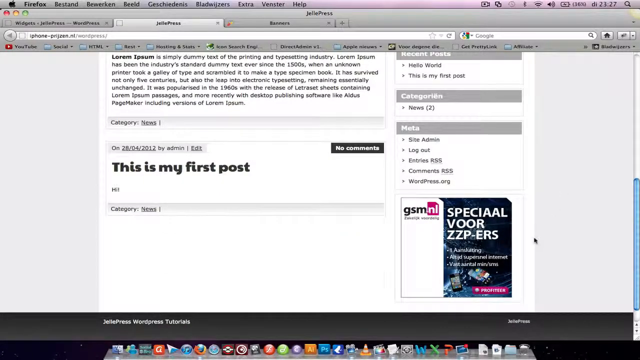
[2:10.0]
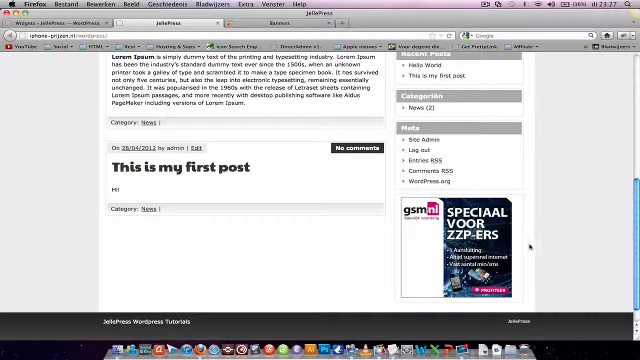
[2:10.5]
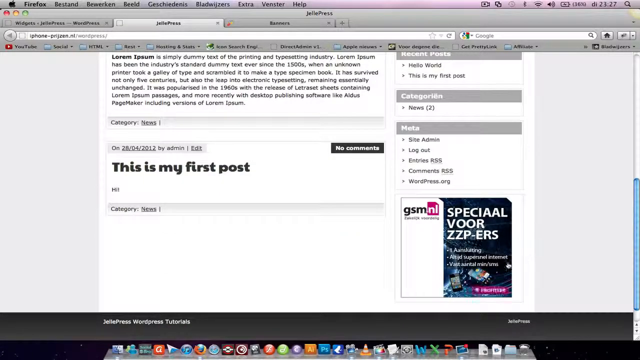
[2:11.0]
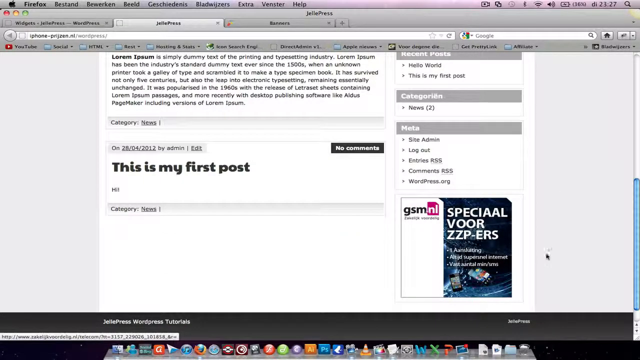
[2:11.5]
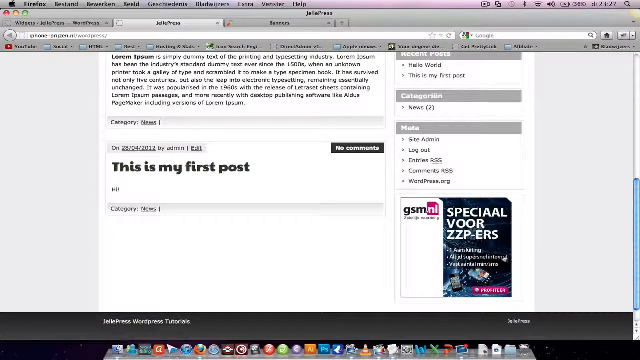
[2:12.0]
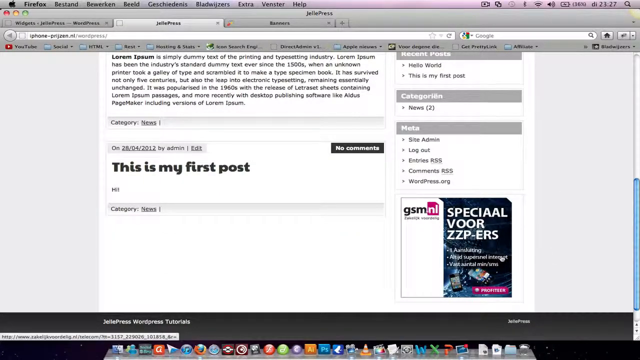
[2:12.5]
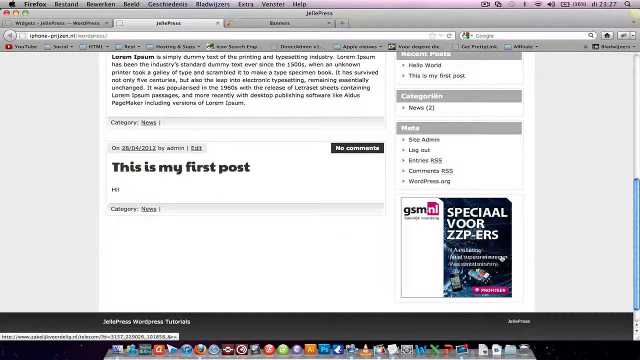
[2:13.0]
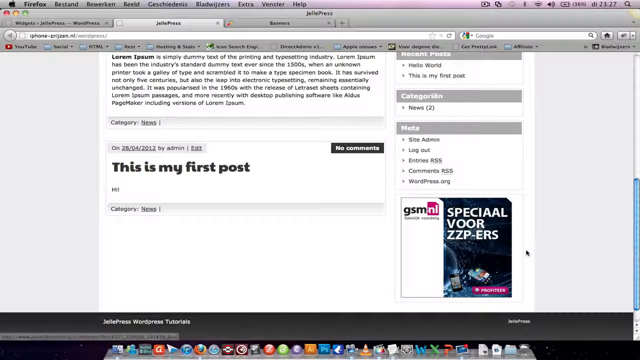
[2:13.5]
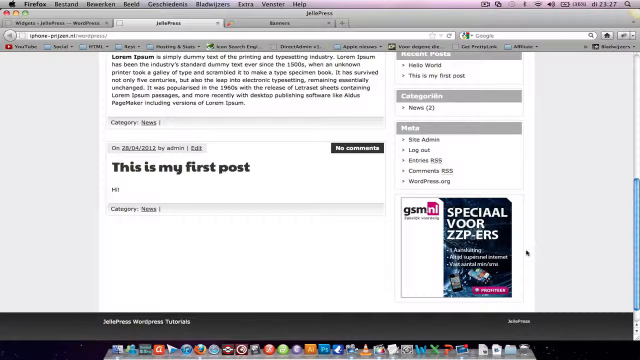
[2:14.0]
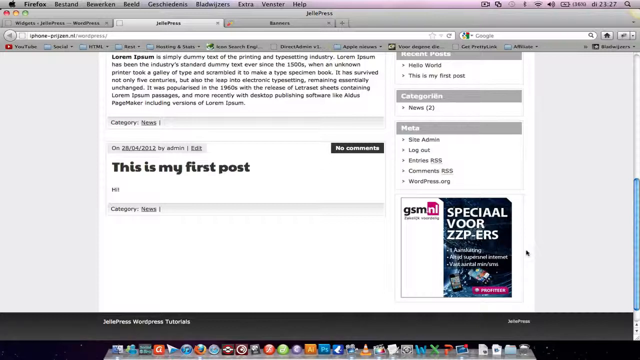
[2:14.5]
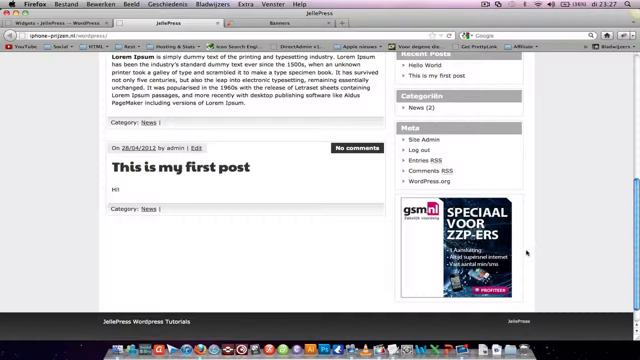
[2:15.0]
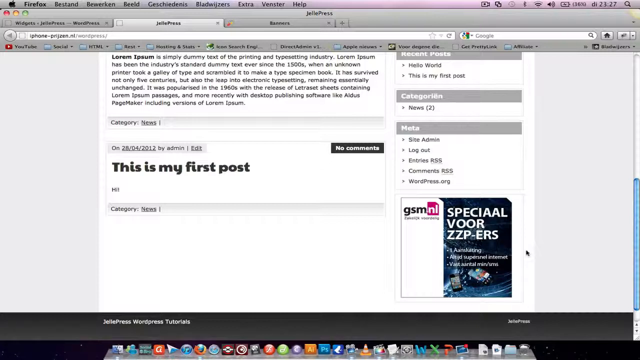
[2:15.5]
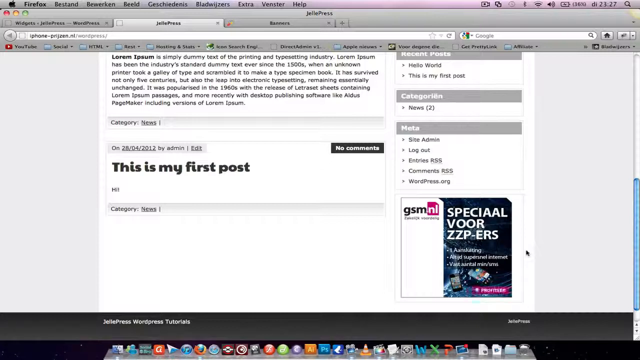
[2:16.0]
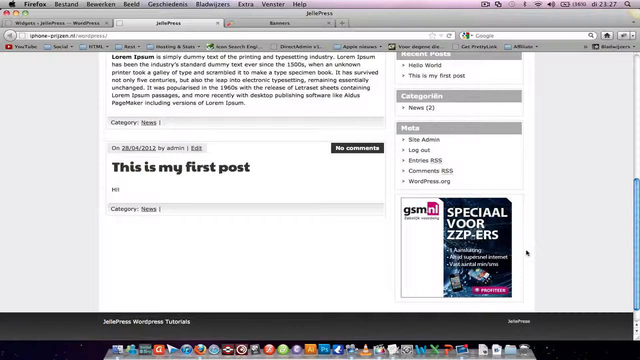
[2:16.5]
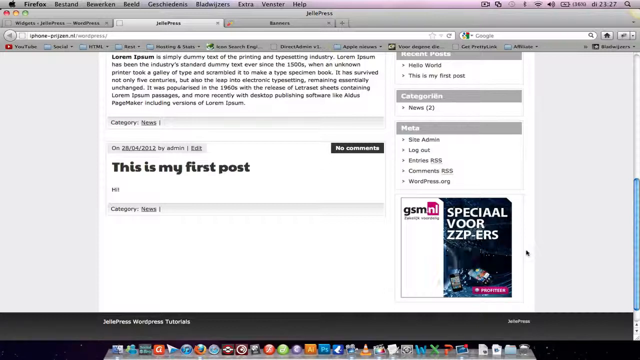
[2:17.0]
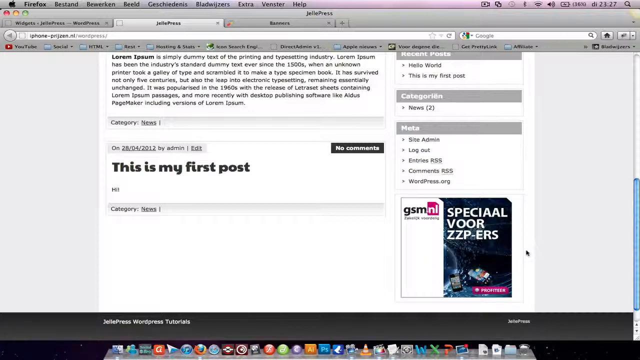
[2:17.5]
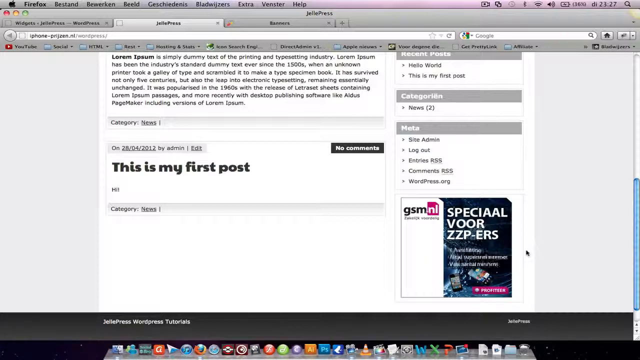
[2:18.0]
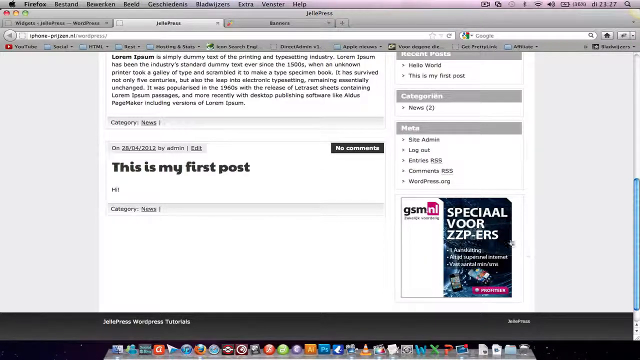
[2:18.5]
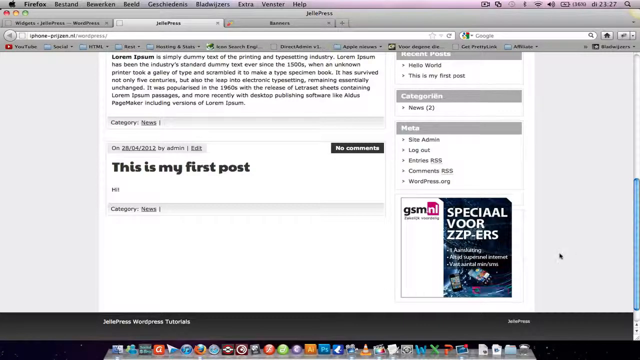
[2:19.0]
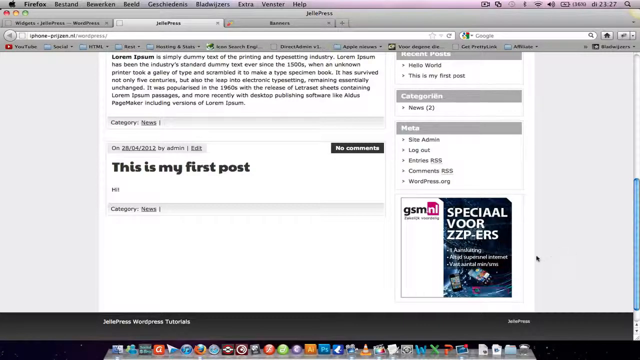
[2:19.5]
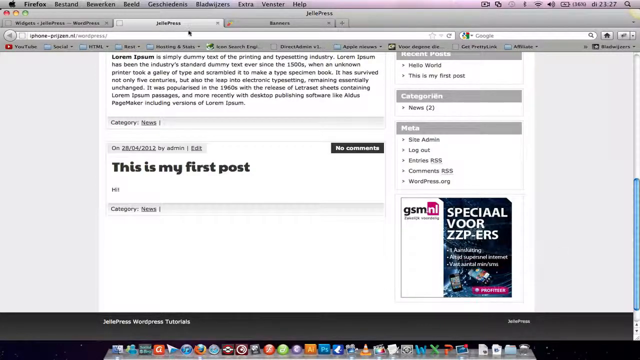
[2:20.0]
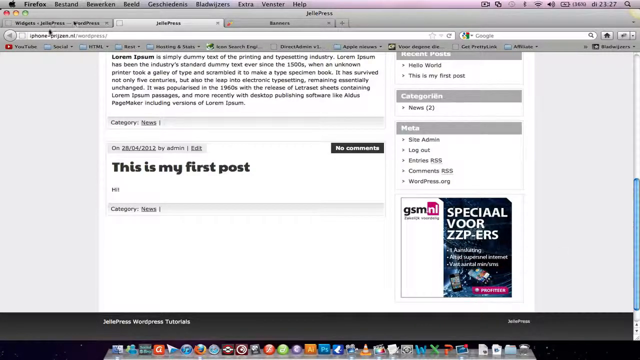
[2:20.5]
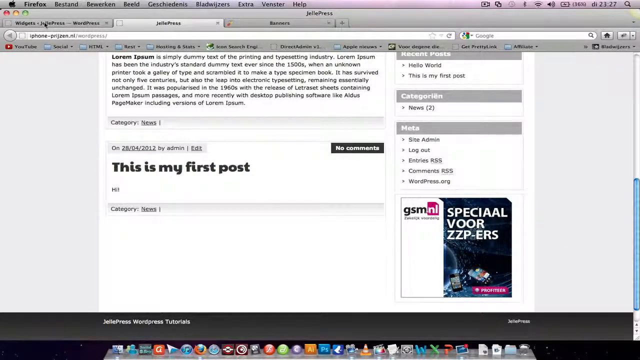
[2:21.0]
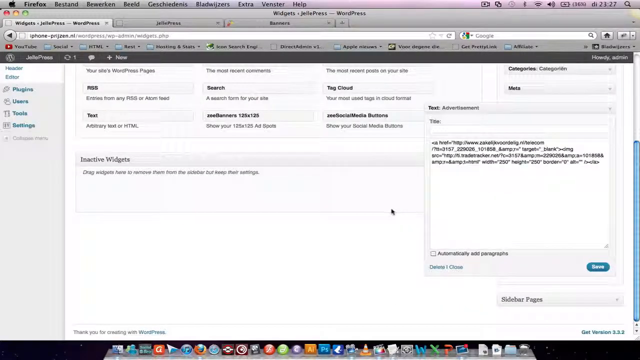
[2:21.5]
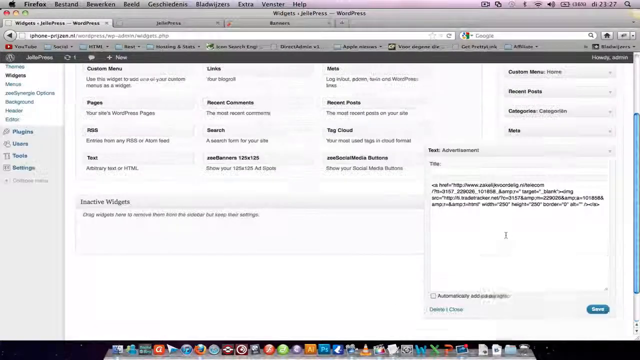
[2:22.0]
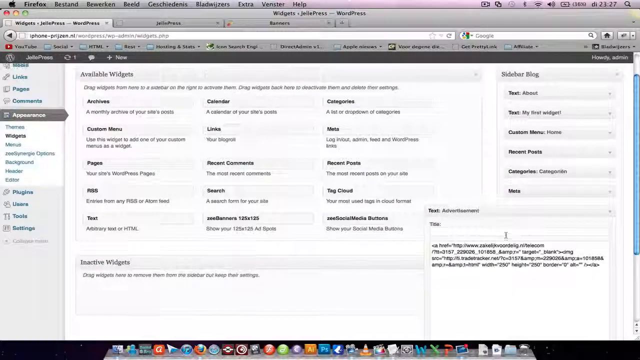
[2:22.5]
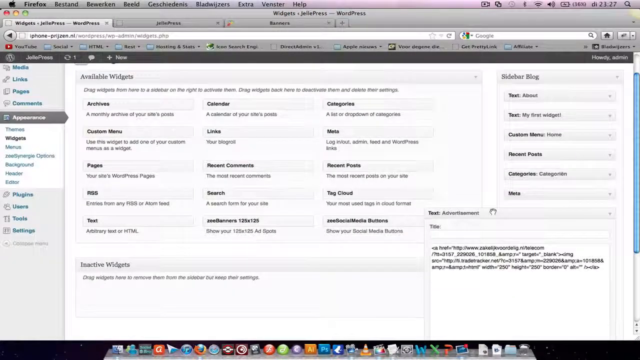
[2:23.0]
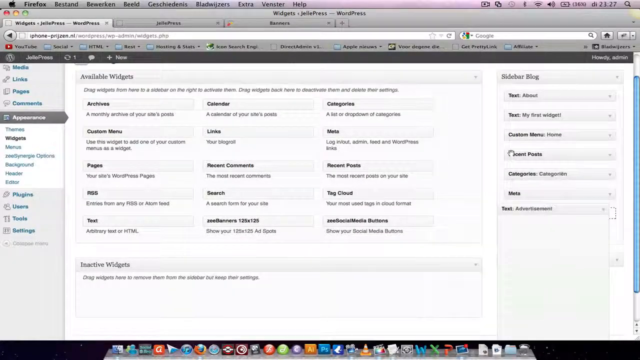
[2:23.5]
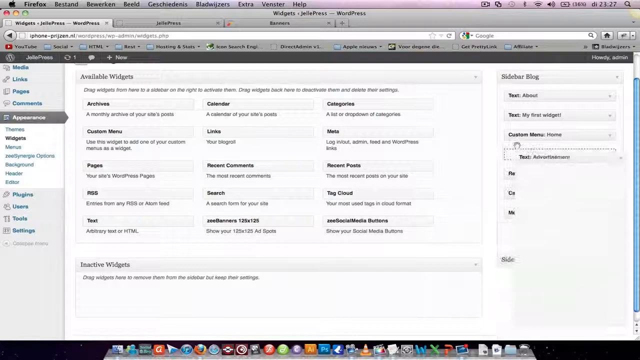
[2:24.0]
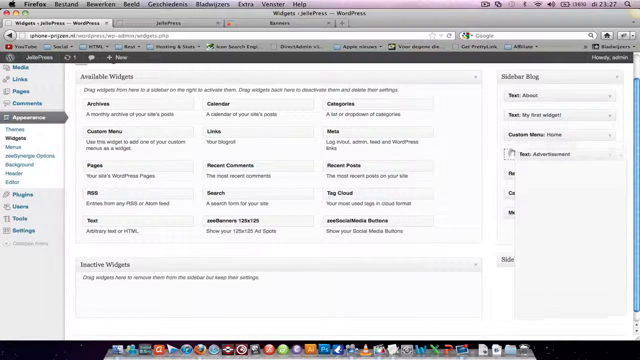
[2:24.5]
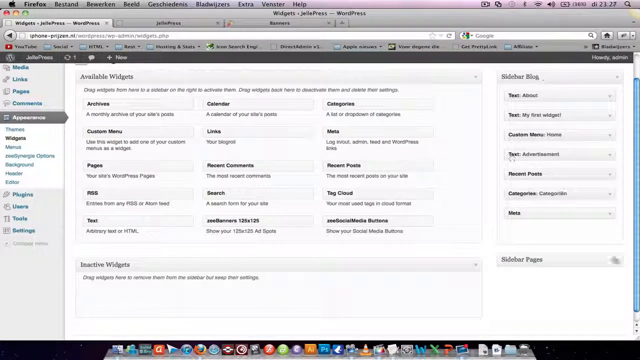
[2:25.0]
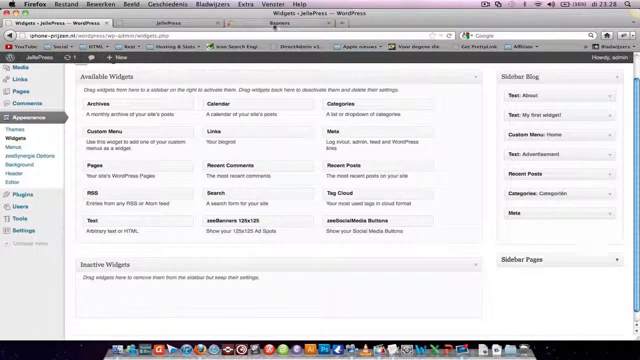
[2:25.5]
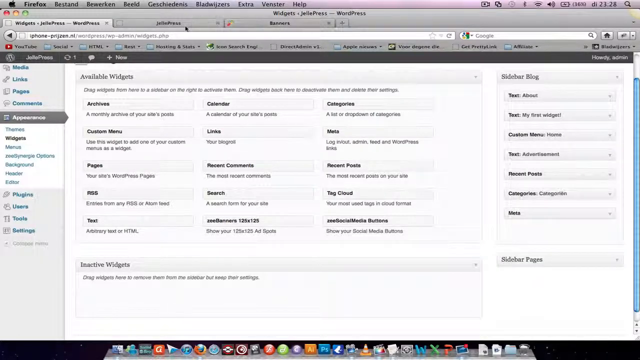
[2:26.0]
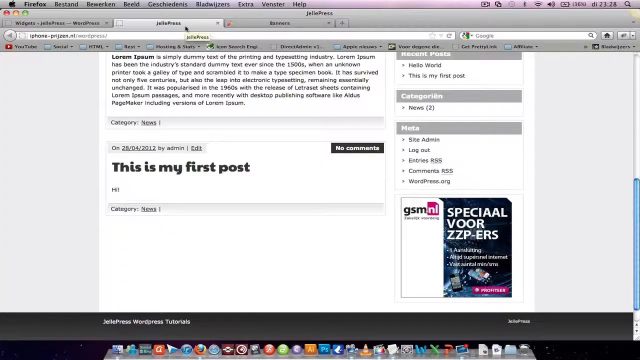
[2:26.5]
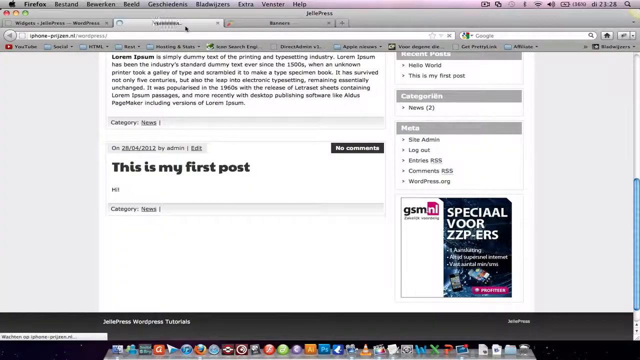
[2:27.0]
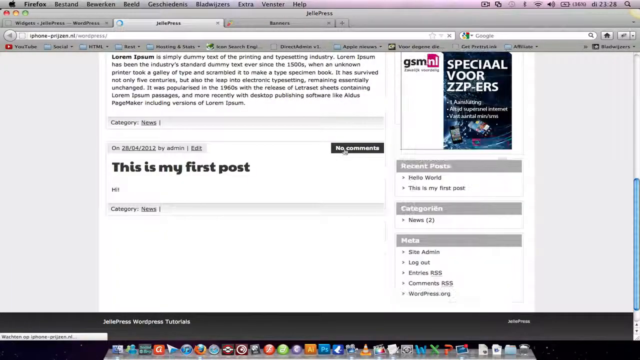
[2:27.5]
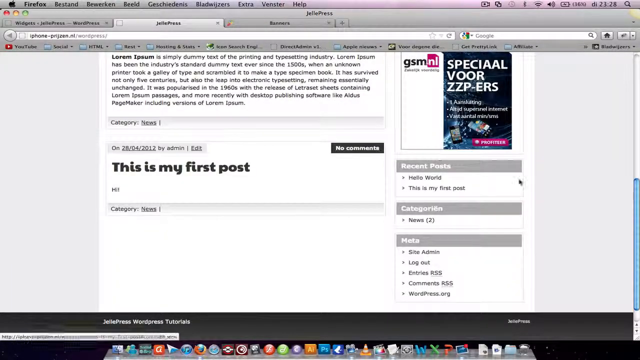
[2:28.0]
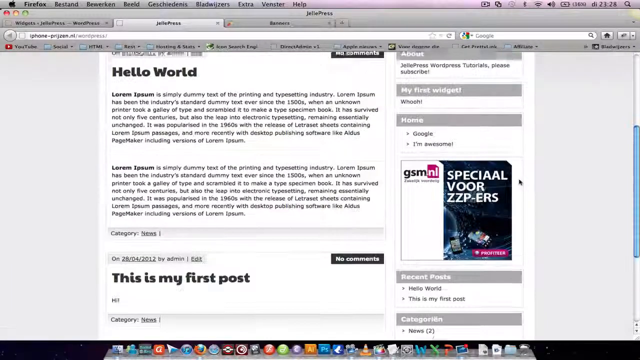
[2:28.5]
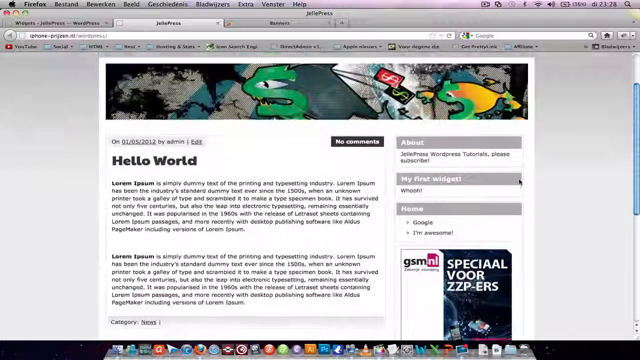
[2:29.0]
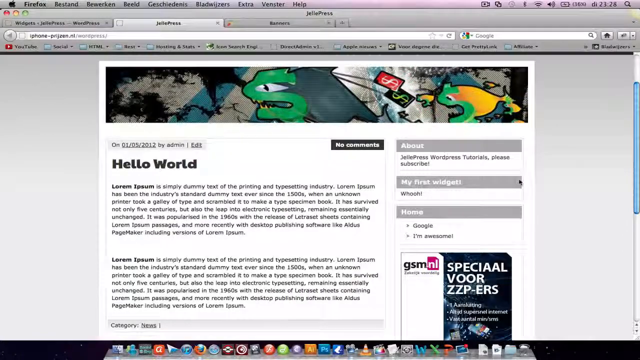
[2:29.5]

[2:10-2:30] The cursor goes over the advertisement, which blinks its words, then goes back to the widgets page, where the text widget titled advertisement is moved above two tabs, "custom menu" and, below that, "recent posts". The person goes back and refreshes the Jelle Press page, and the advertisement now appears above the recent posts tab instead of at the bottom, with the home tab right above it. The advertisement is split in half, one white side and one blue side, with words in a foreign language. The white side seems to advertise something at least shaped like an SD card; it has black words, except that "NL" has a pink SD-card shape. The right side has white words, a blue segment, and two pictures of phones with some kind of image behind them.